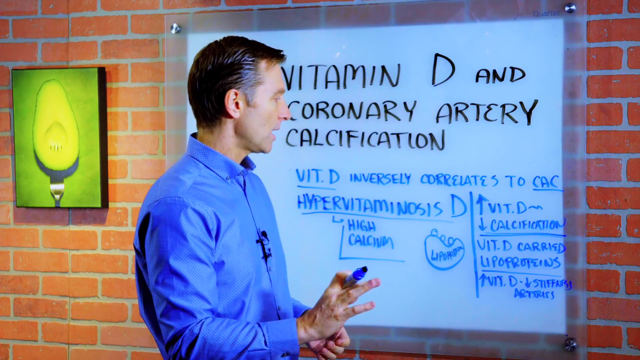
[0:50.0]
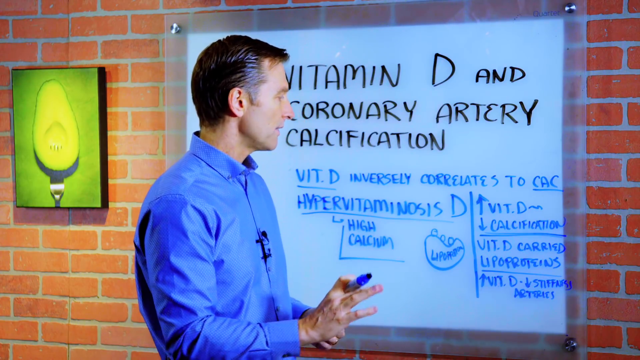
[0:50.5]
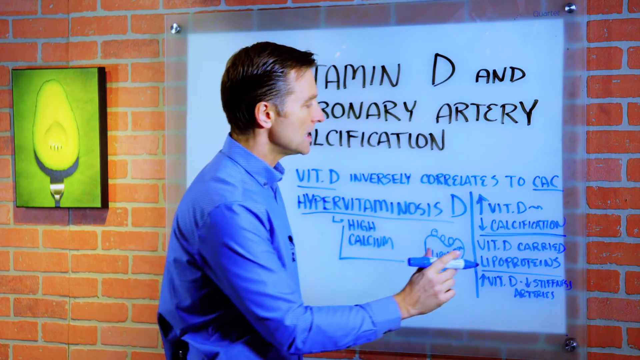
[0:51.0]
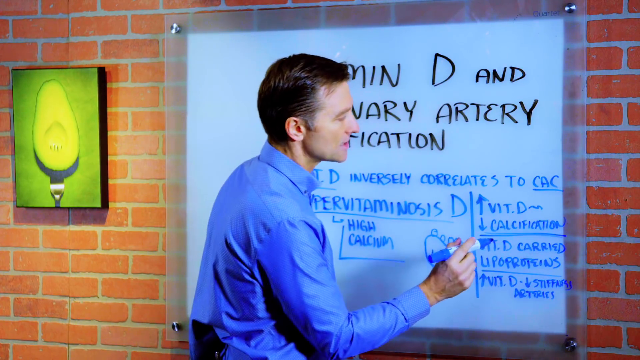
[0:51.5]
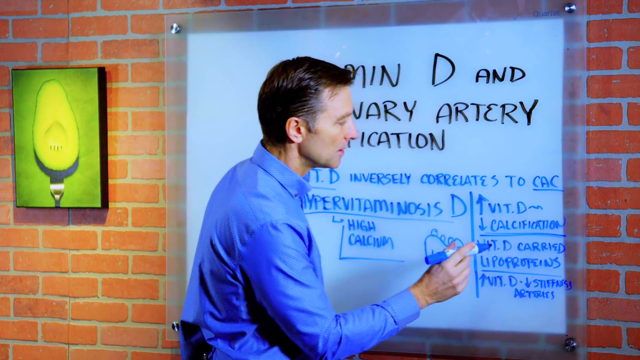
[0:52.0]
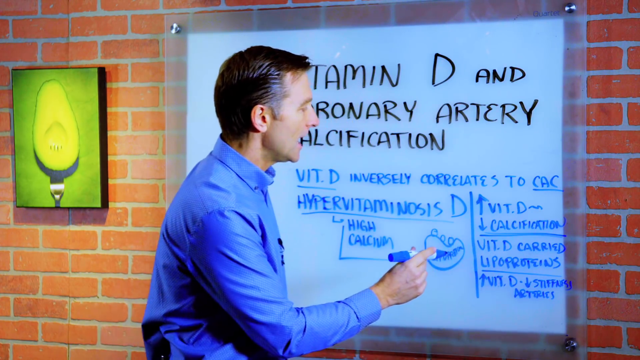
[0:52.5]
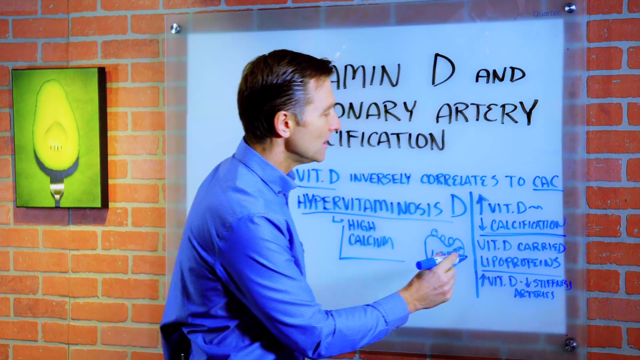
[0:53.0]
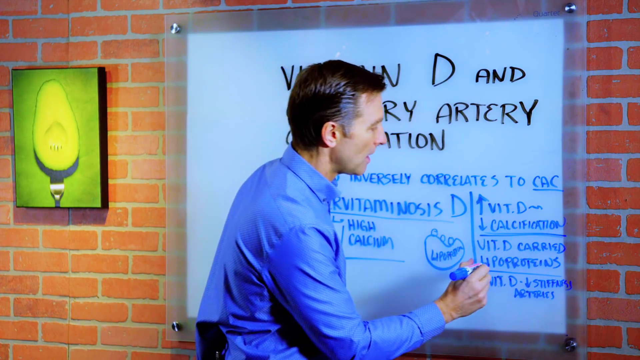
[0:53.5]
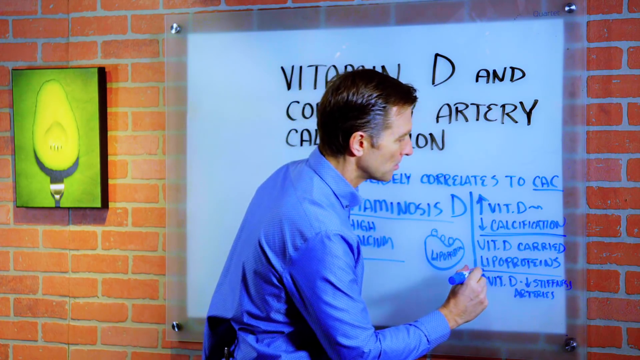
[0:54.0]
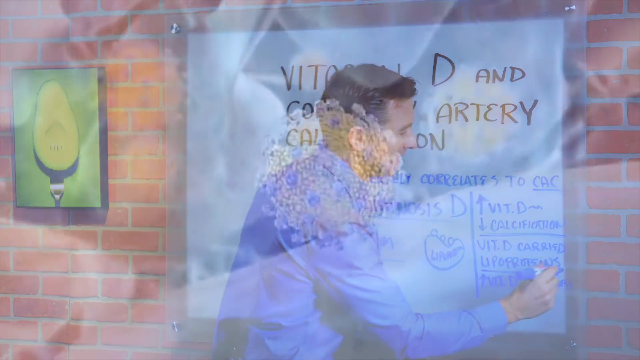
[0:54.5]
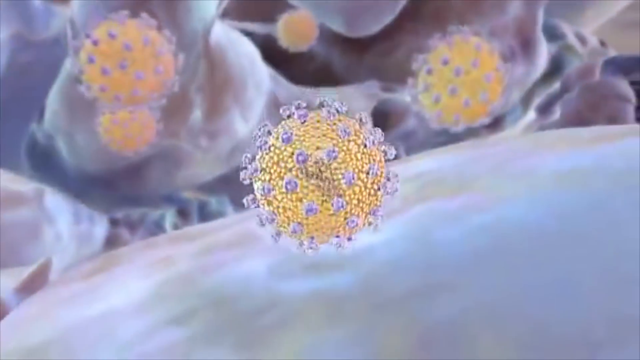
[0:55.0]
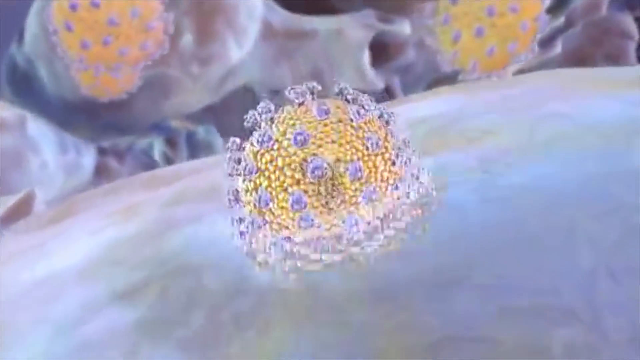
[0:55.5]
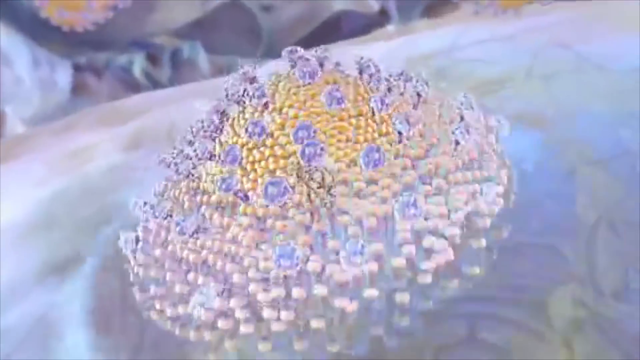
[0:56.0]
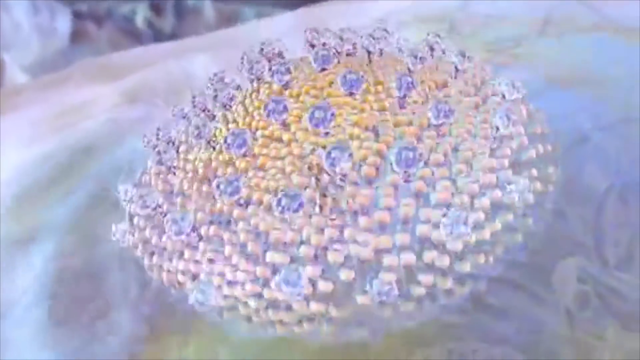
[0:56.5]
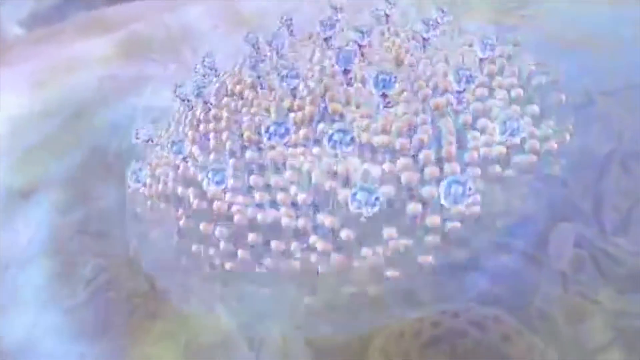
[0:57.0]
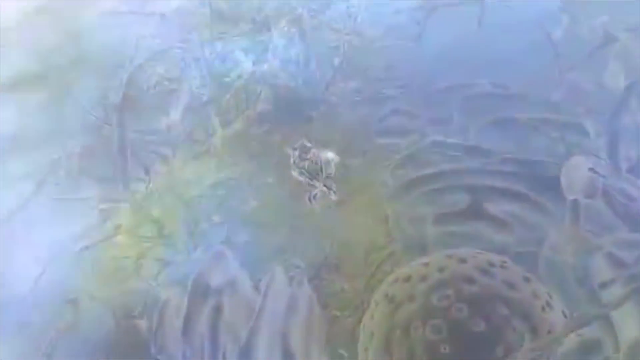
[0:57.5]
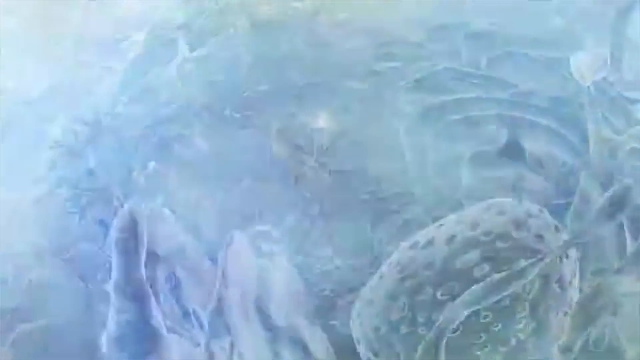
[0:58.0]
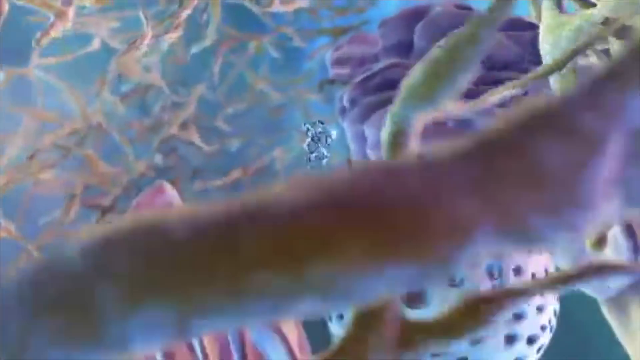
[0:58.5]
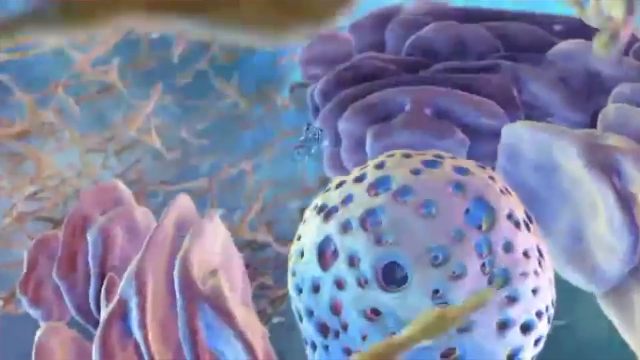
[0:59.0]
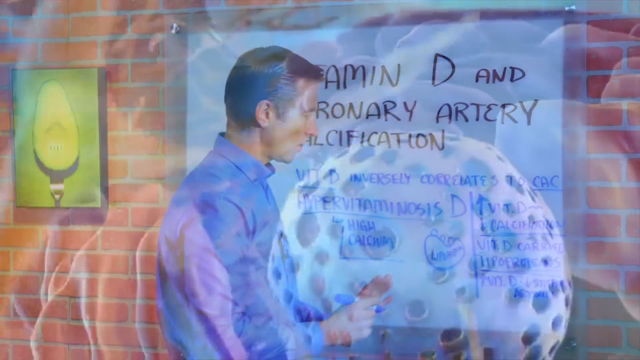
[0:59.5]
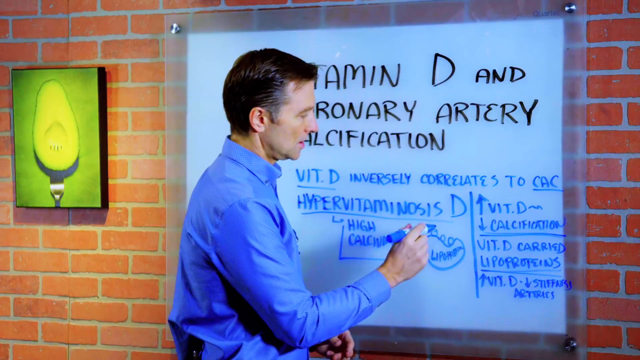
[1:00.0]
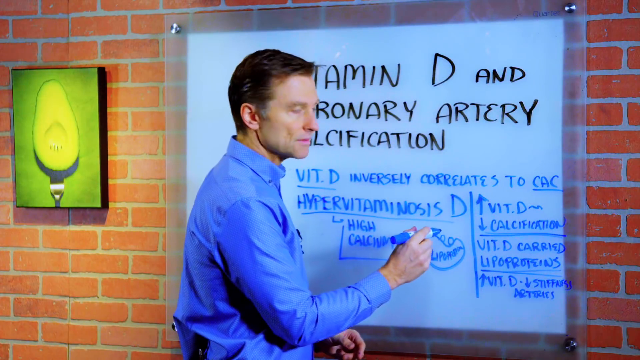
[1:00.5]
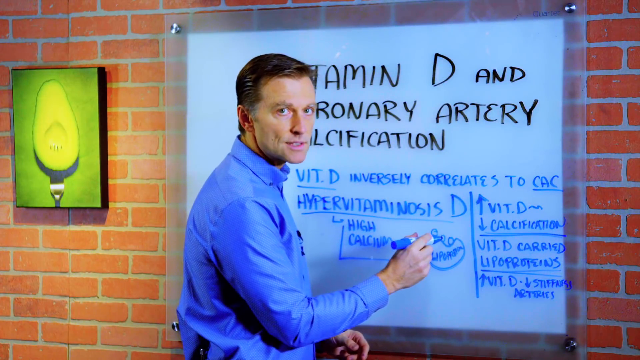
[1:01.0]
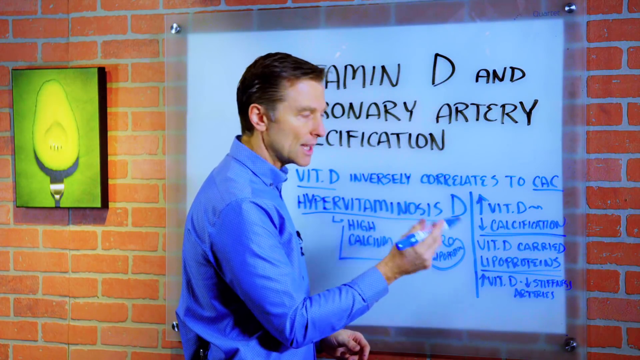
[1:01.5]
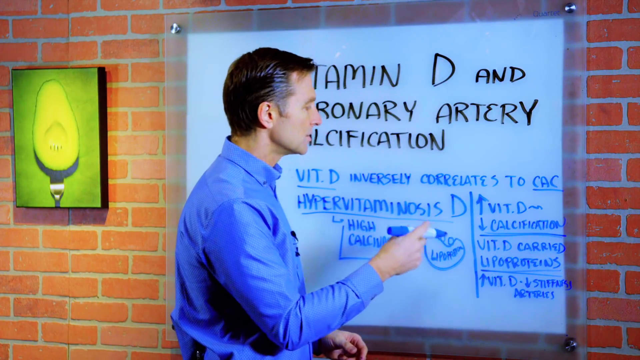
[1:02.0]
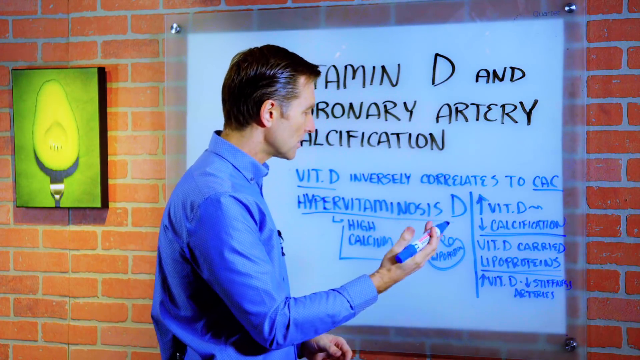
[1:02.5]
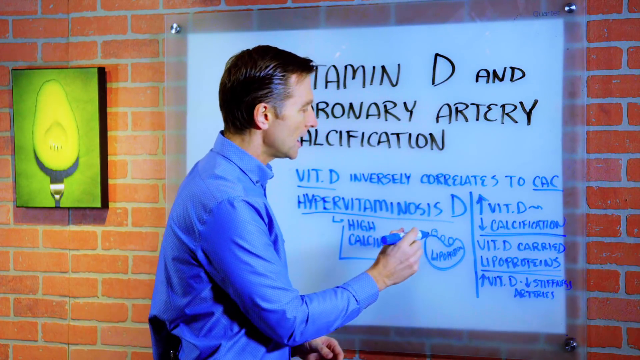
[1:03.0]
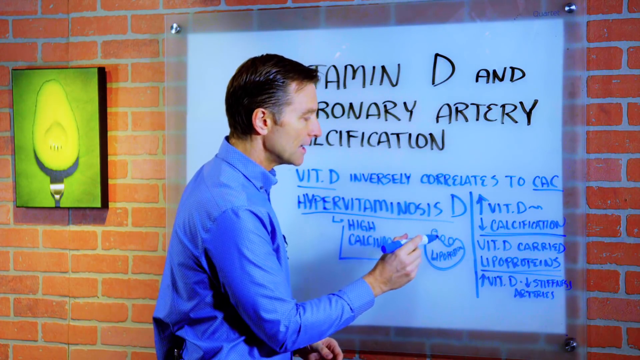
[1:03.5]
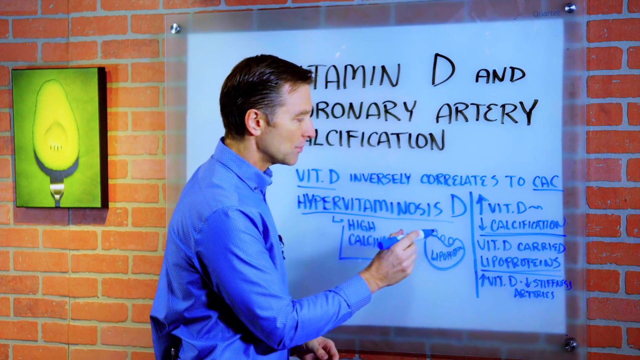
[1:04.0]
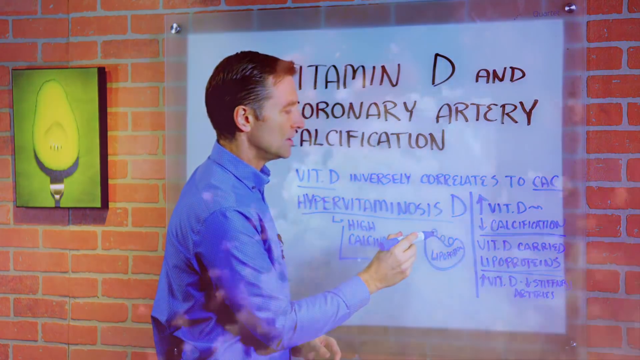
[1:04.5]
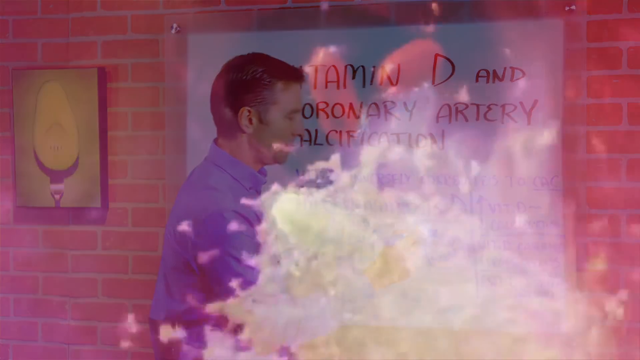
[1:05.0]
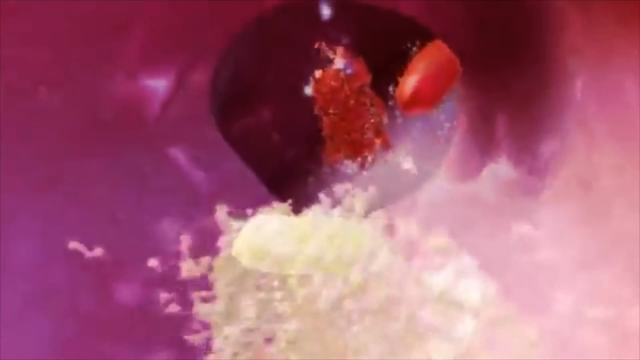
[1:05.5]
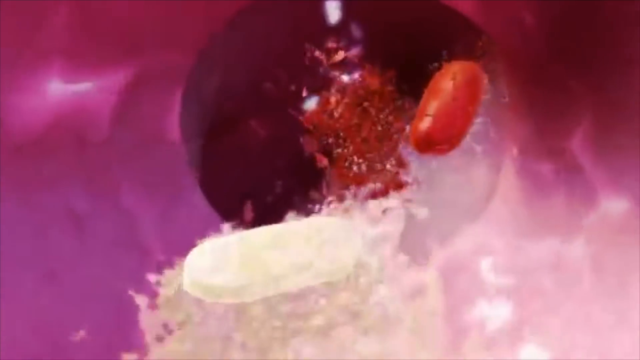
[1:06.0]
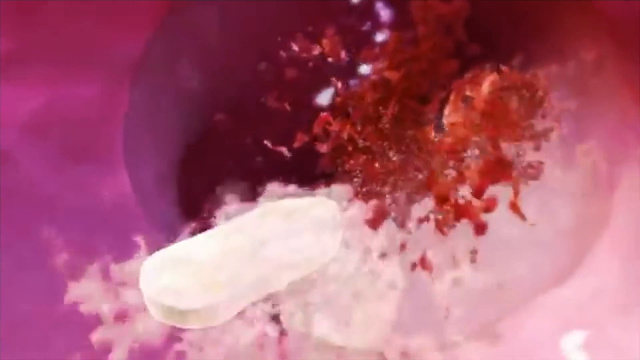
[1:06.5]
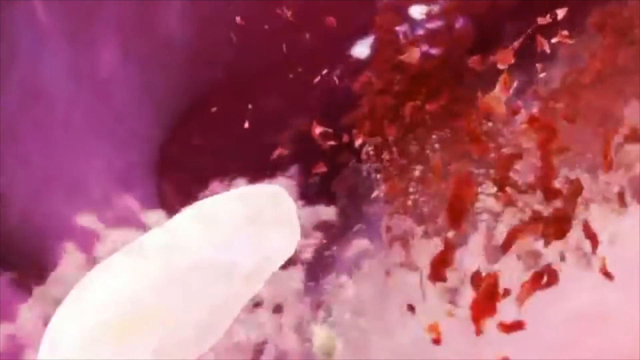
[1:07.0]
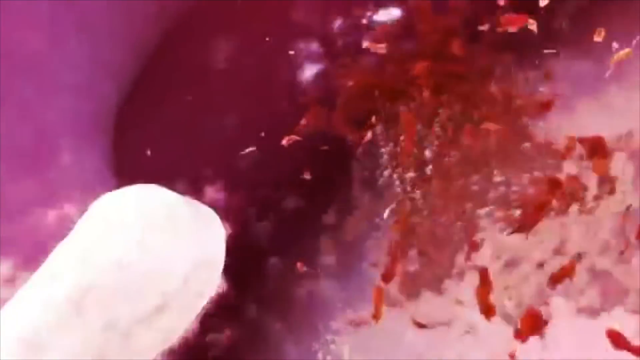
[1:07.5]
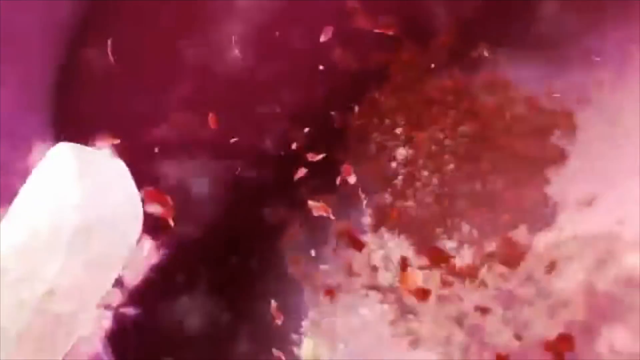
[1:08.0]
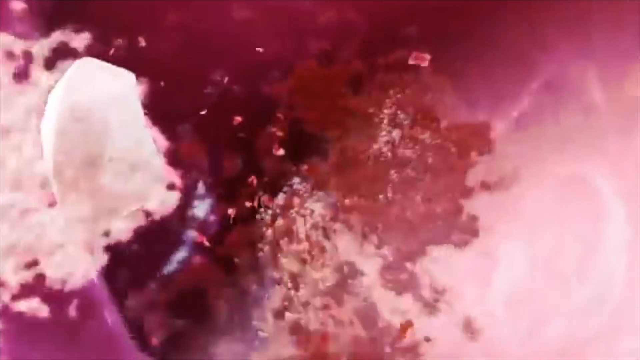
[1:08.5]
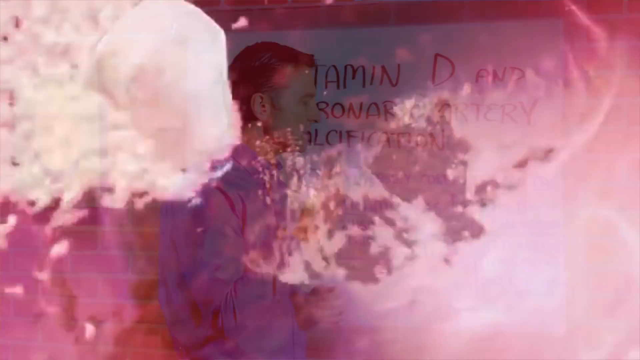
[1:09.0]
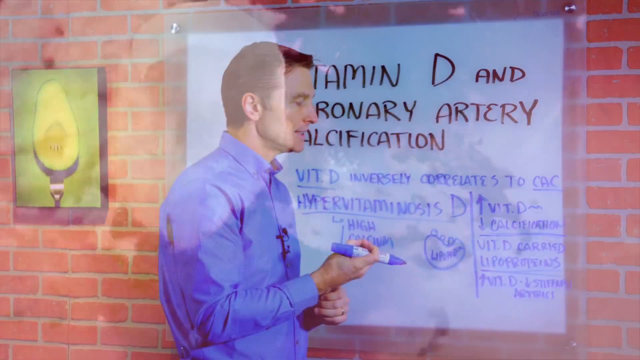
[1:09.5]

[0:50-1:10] The man turns a little to his left, his left shoulder toward the camera in front of the dry erase board. He bends down, looks about to erase, comes back up, and almost underlines the lipoprotein area near the bottom. A 3D simulation follows: what looks like a big, long sphere with many purple things sticking up and pores all over it, with more in the distance. It collides with a translucent white surface; like a ball of beads, it breaks apart as soon as it hits the surface and turns into a liquid. The view then zooms through the inside of the body, showing some blue, what looks like lungs in the distance, a very porous-looking ball, and to the left something that looks like a wrinkled pink shirt with ridges. He makes marks again with the marker's cap off and points to that area on the dry erase board. The view then goes into a tunnel that is pinker all around, with a whitish liquid sloshing and what look like cut-up little red squares moving through on top.